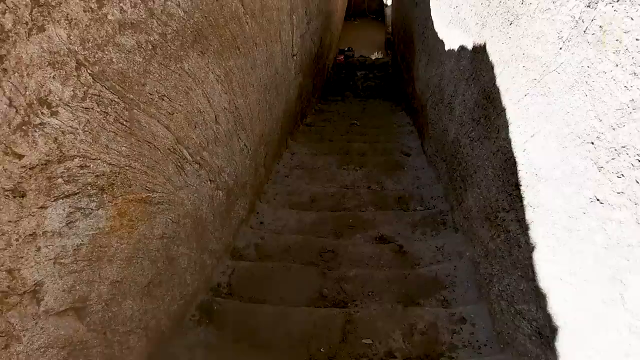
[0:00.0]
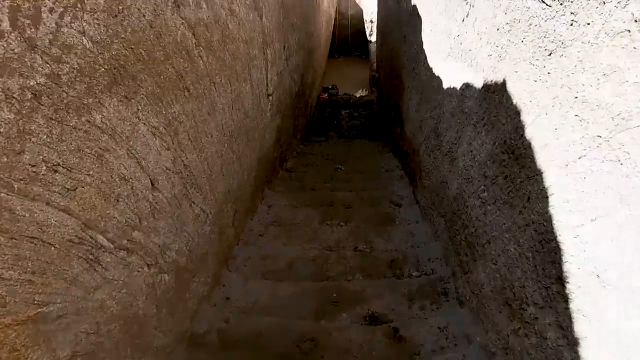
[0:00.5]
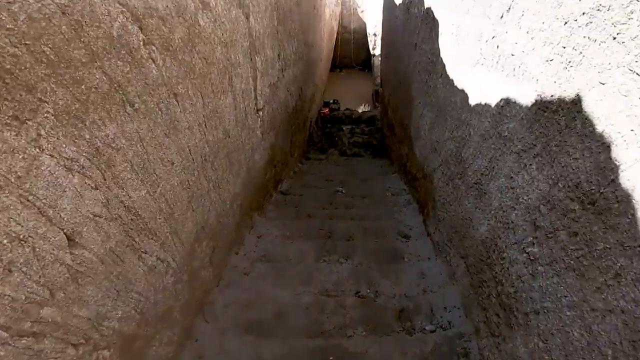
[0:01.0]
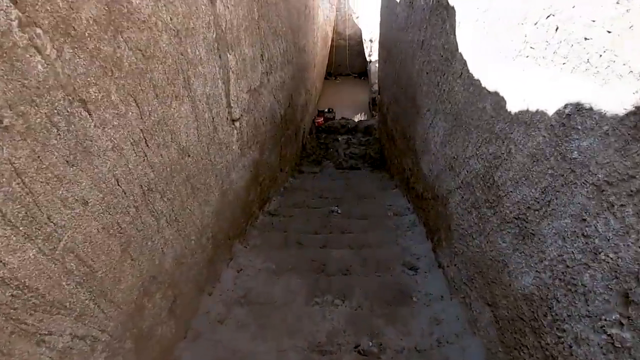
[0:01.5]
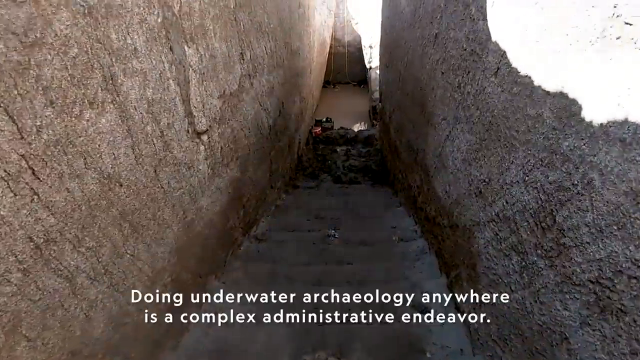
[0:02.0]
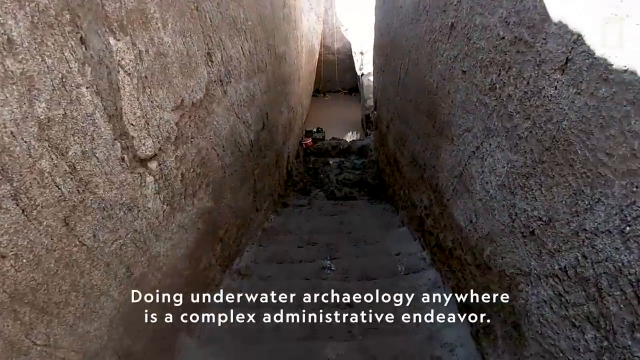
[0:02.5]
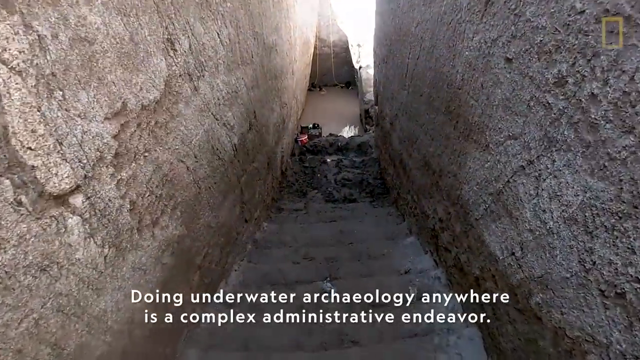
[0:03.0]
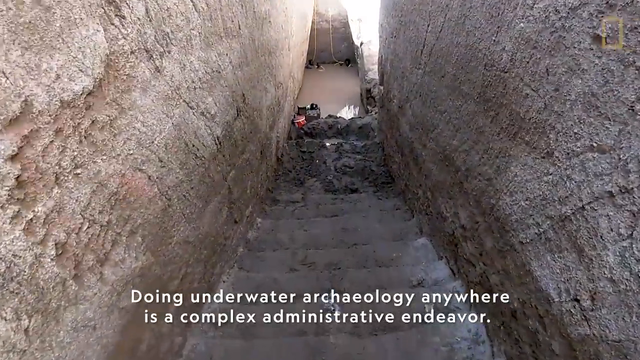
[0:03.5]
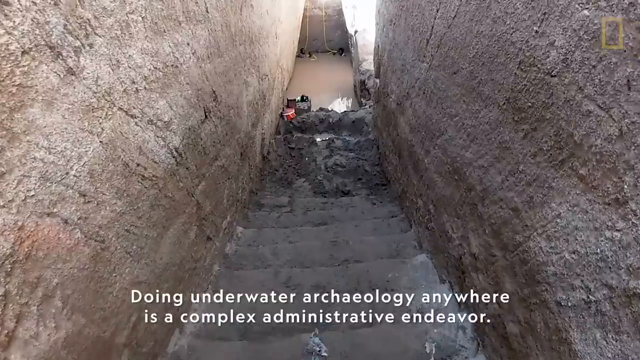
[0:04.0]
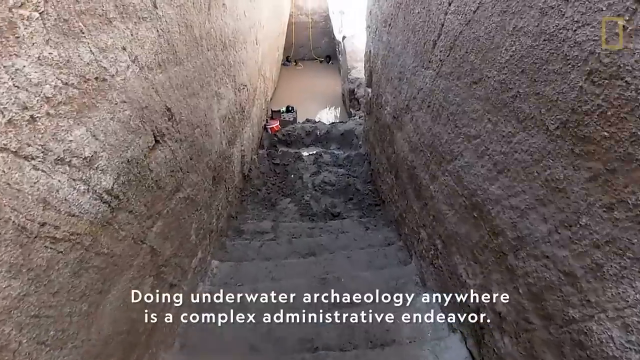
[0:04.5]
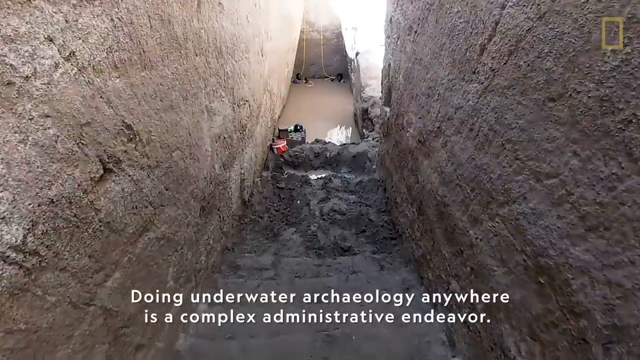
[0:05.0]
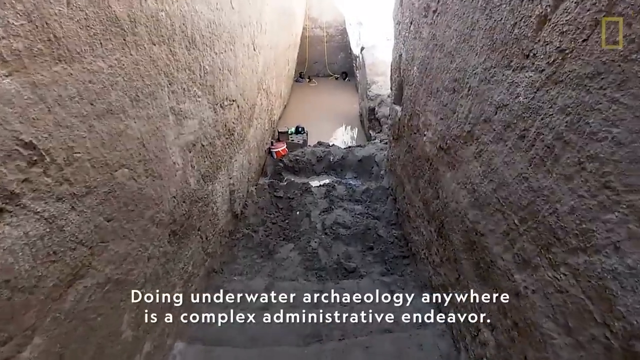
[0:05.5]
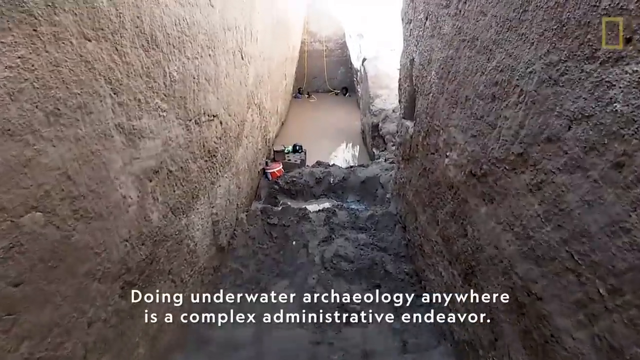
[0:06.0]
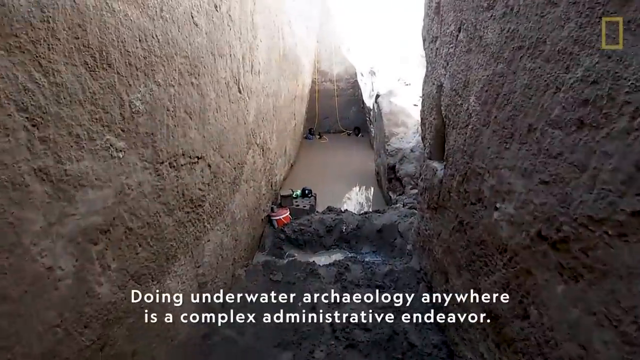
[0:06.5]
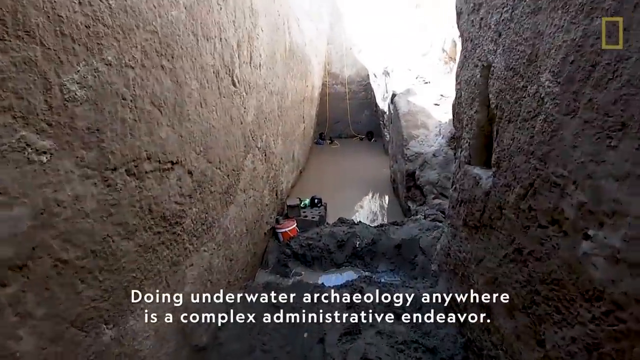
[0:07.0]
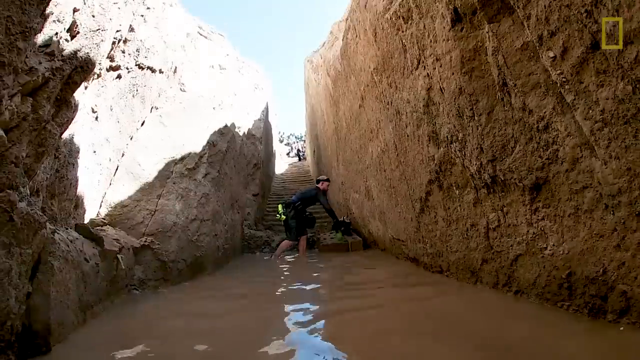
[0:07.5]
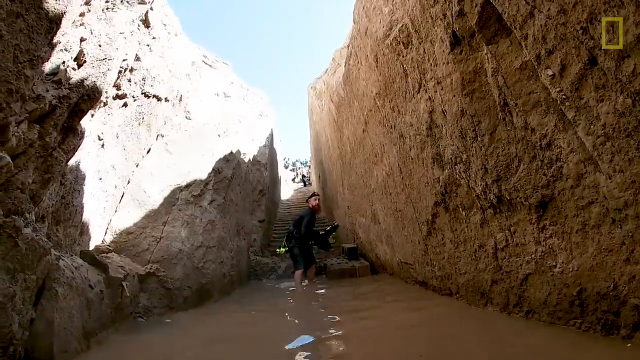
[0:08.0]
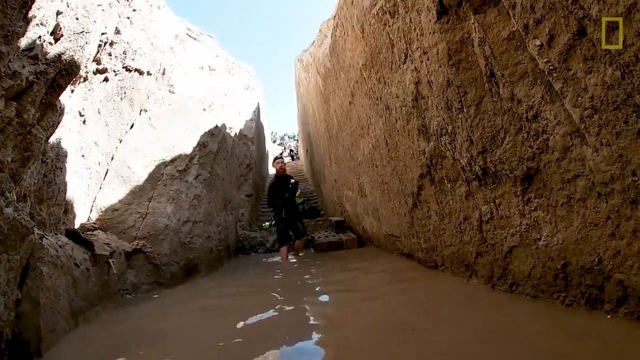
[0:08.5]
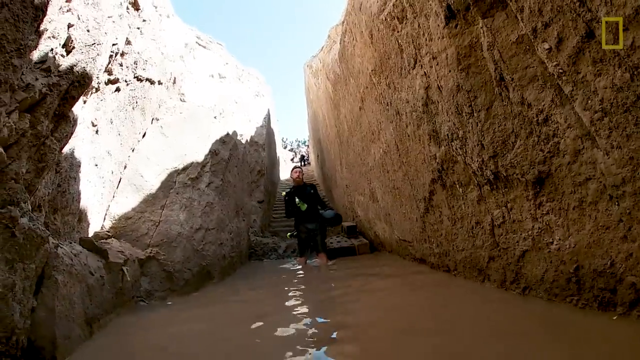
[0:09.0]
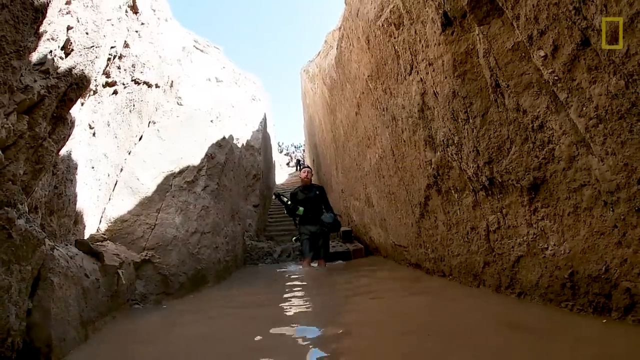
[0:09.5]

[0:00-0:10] A man who is about to do some underwater archaeology is in what appears to be ruins, possibly ancient burial grounds, located in Sudan. He walks down some stairs between two big rock formations to some muddy water. He then gets into the water with his expensive camera equipment and starts walking toward the camera, speaking. It looks like he is going to do some type of exploration.